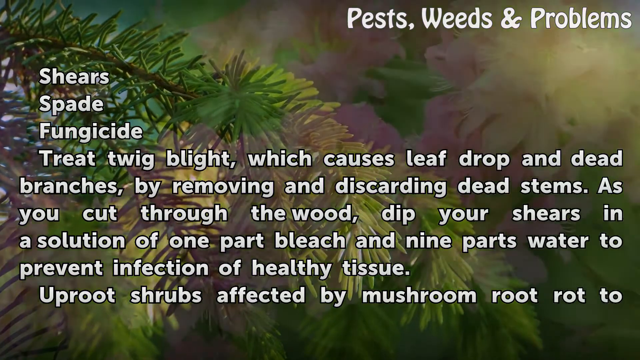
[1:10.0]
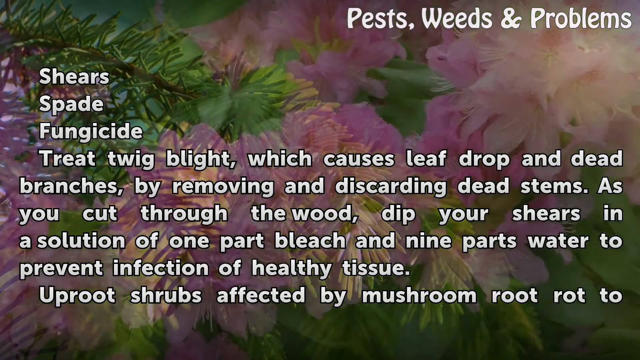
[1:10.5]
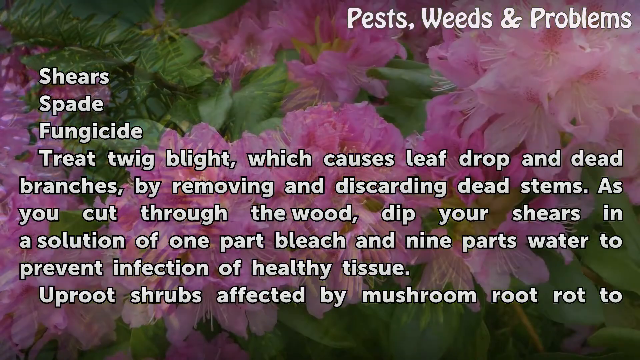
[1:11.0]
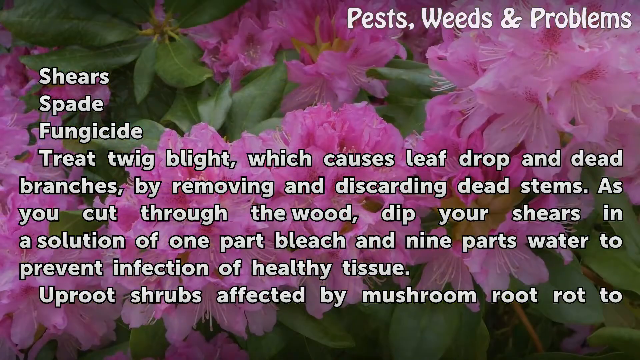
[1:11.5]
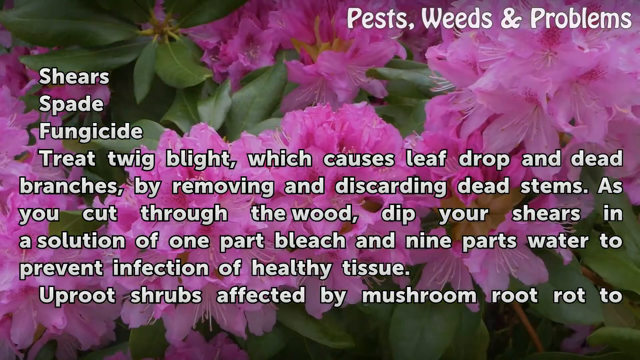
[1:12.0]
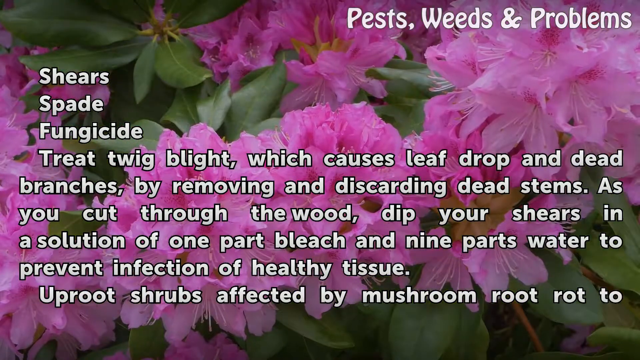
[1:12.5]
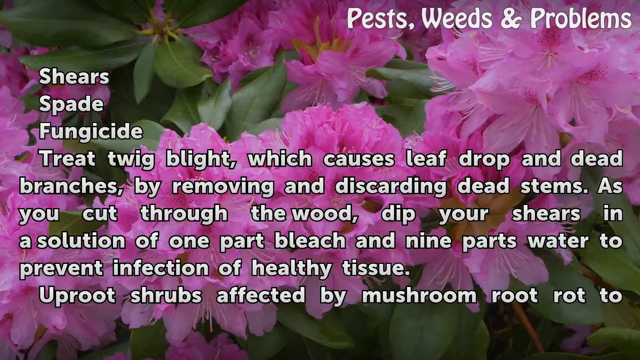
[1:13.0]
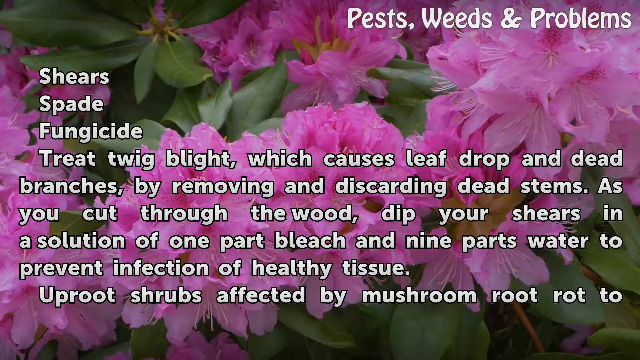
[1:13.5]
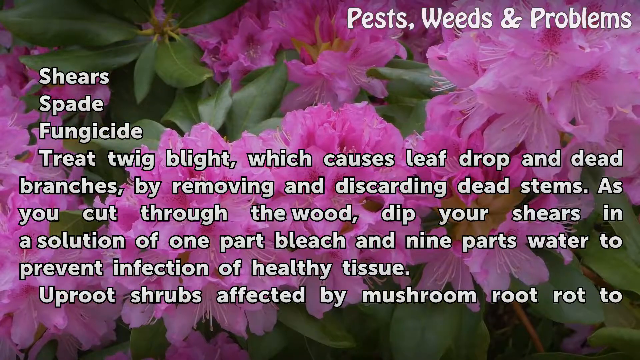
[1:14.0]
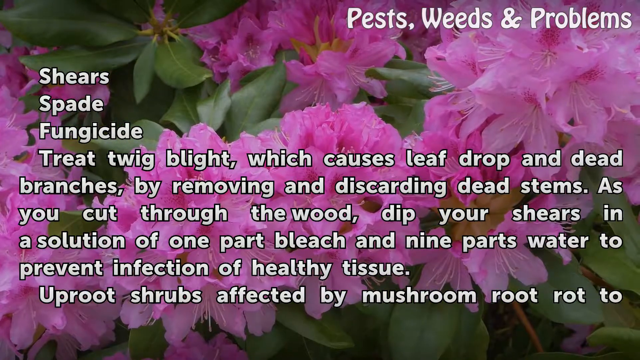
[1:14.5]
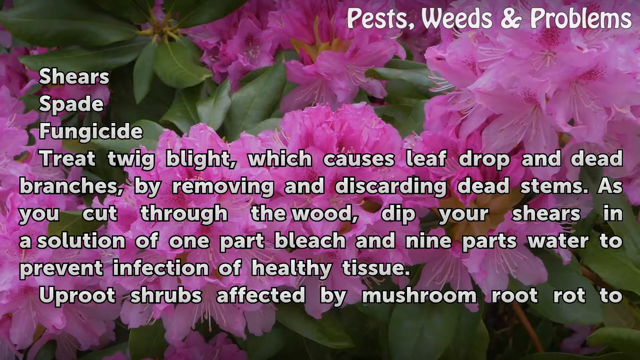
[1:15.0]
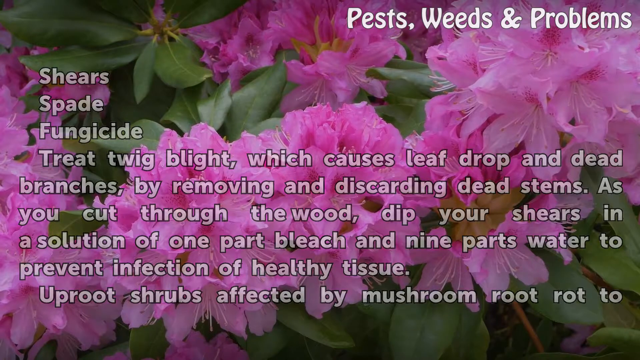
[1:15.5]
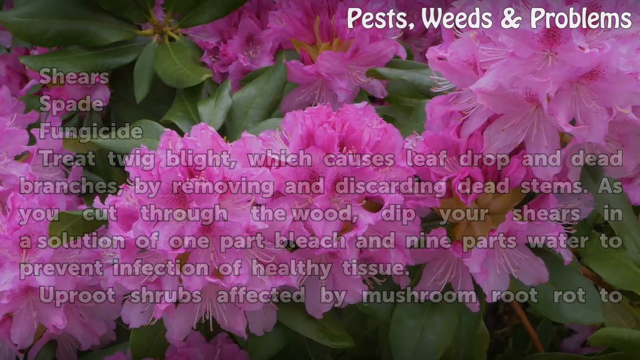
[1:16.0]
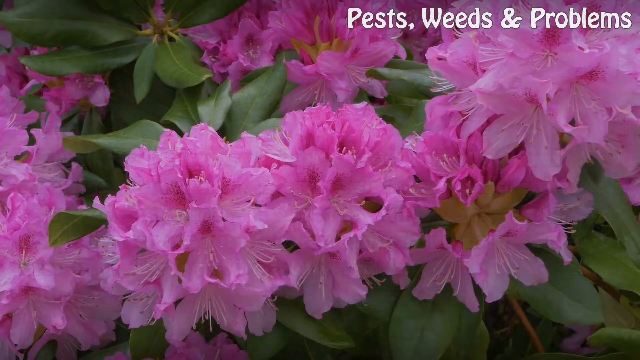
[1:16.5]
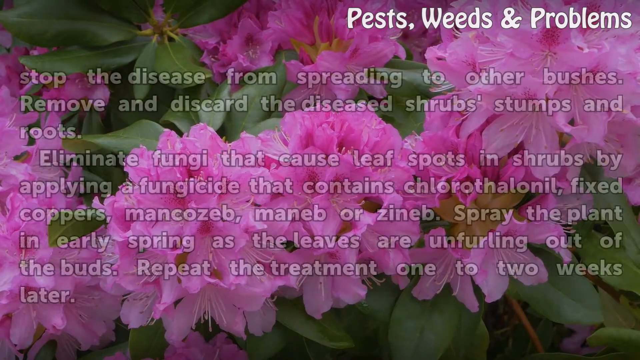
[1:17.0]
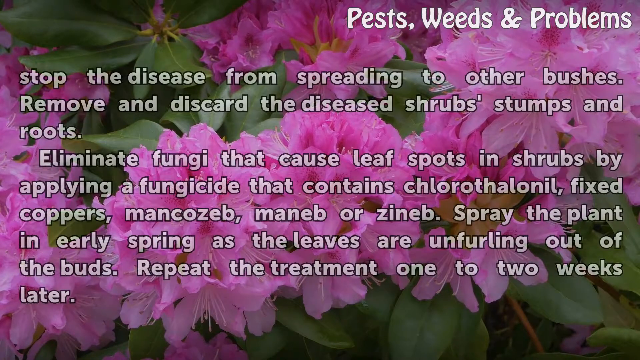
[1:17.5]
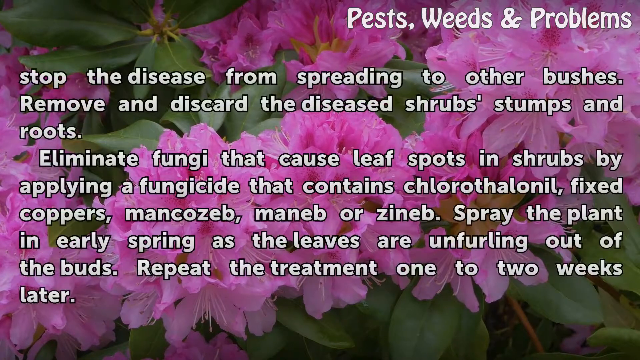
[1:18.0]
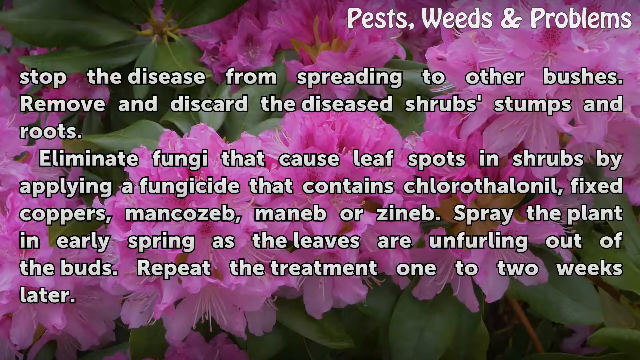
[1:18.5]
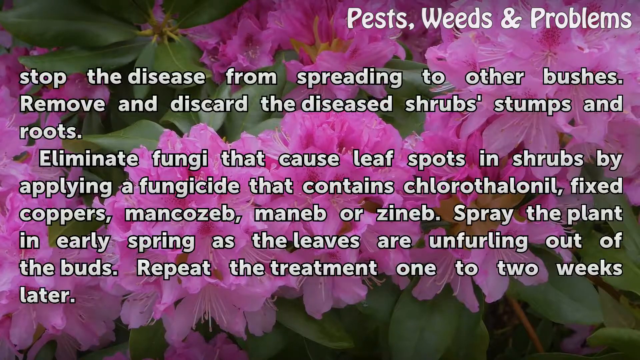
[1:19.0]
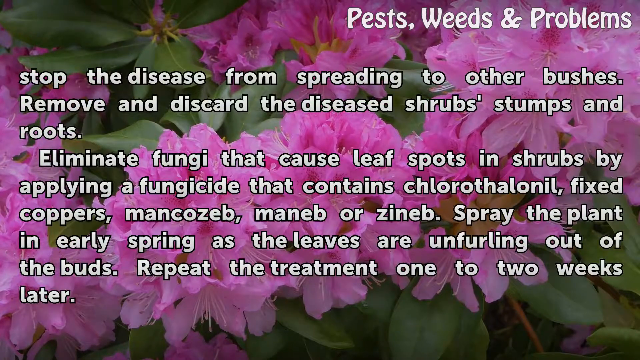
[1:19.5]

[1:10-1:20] Nine lines of text are overlaid on a close-up view of pine branches: "Shears", "Spade", "Fungicide", "Treat twig blight, which causes leaf drop and dead", "branches, by removing and discarding dead stems. As", "you cut through the wood, dip your shears in", "a solution of one part bleach and nine parts water to", "prevent infection of healthy tissue" and "Uproot shrubs affected by mushroom root rot to". The words disappear and the background switches to clusters of bright pink flowers with green leaves. Nine lines of white text appear over the flowers: "stop the disease from spreading to other bushes.", "Remove and discard the diseased shrubs' stumps and", "roots.", then, beginning a new paragraph, "Eliminate fungi that cause leaf spots in shrubs by", "applying a fungicide that contains chlorothalonil, fixed", "coppers, mancozeb, maneb, and zineb. Spray the plant", "in early spring as the leaves are unfurling out of", "the buds. Repeat the treatment one to two weeks" and "later."